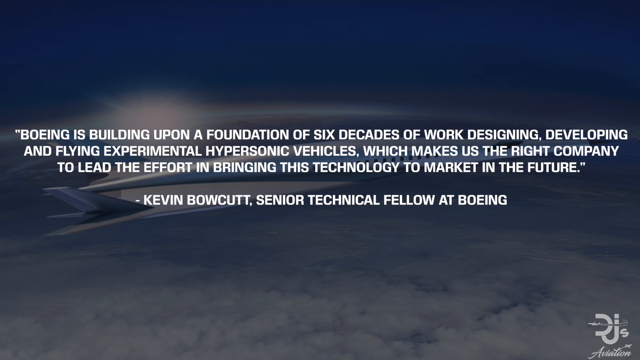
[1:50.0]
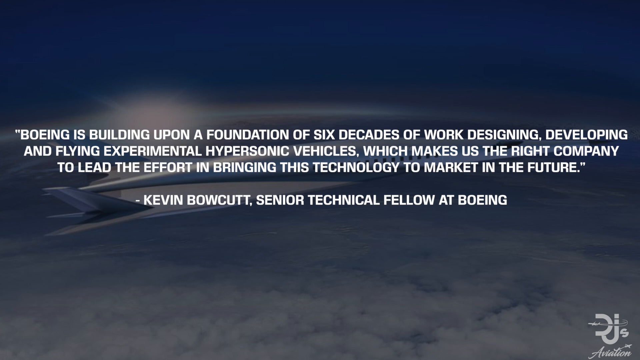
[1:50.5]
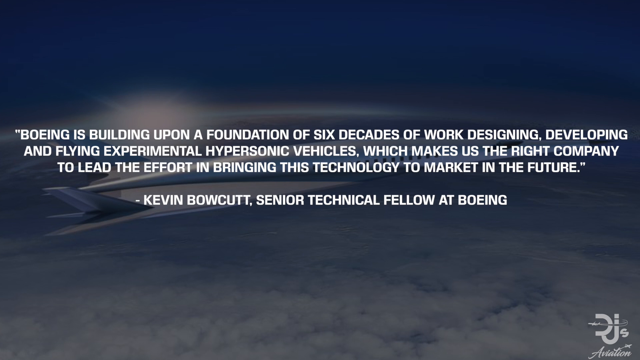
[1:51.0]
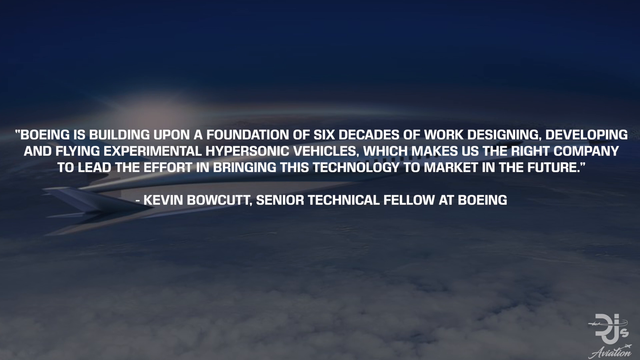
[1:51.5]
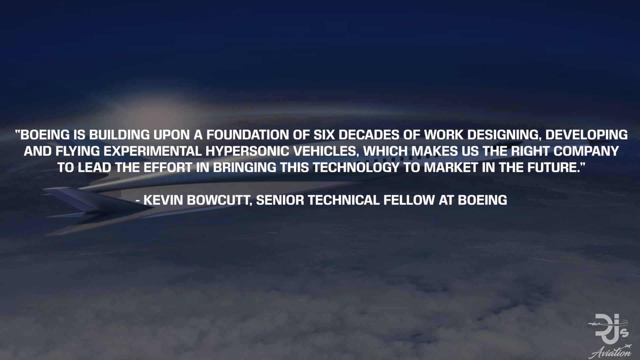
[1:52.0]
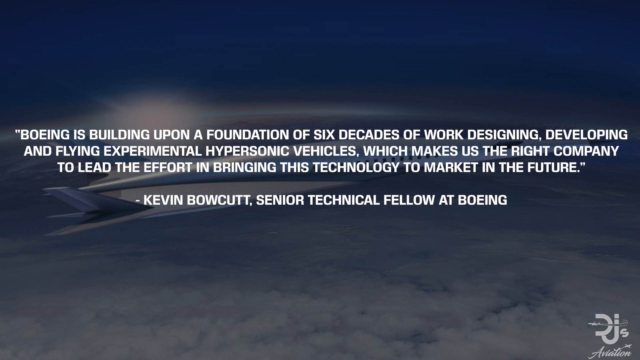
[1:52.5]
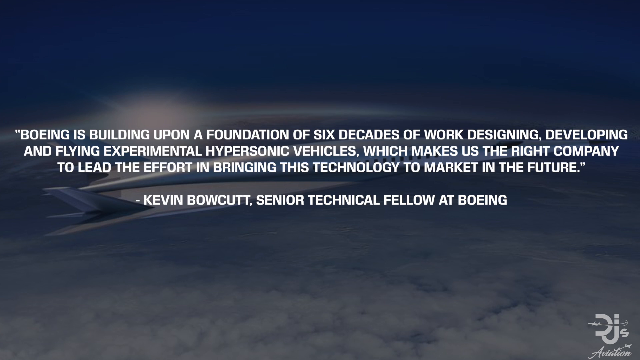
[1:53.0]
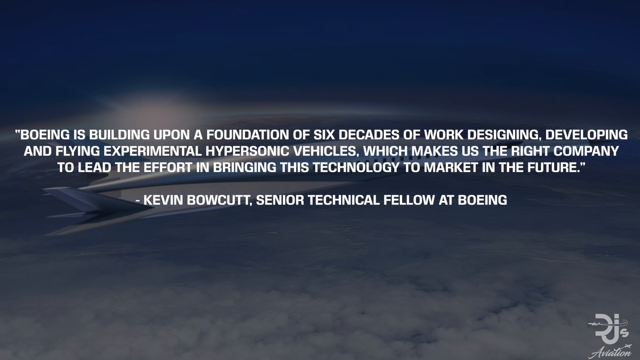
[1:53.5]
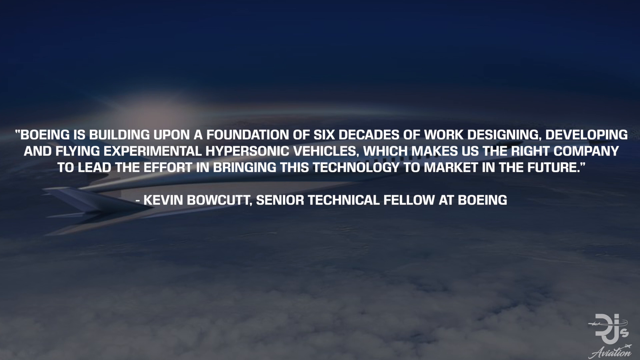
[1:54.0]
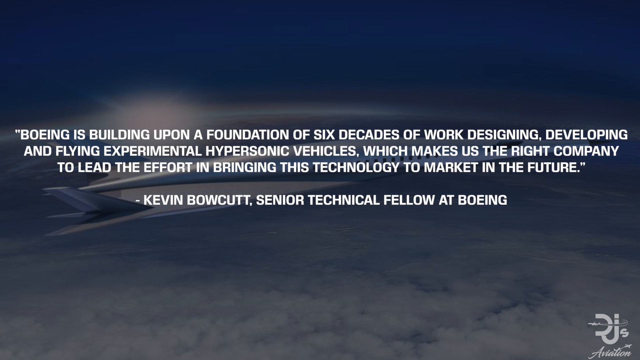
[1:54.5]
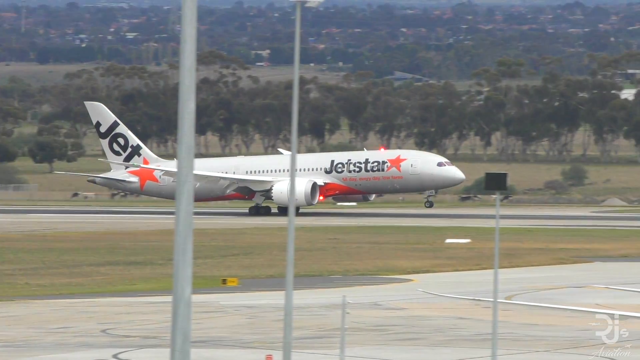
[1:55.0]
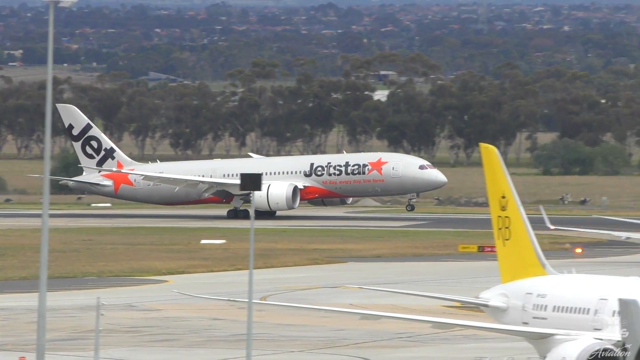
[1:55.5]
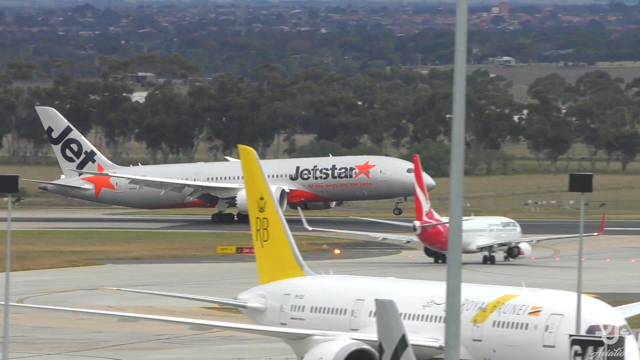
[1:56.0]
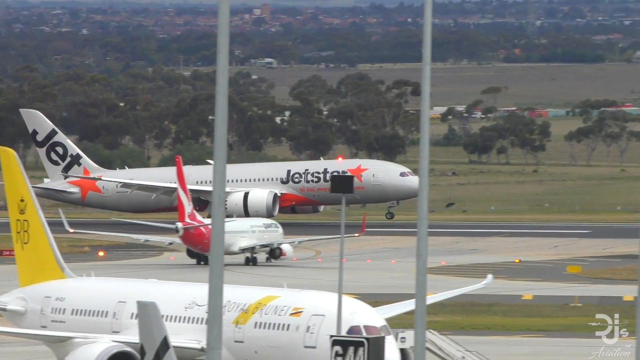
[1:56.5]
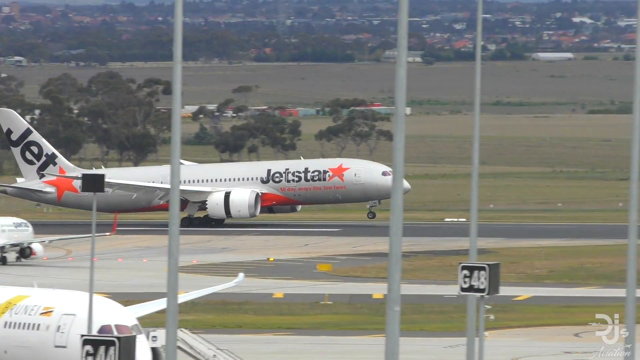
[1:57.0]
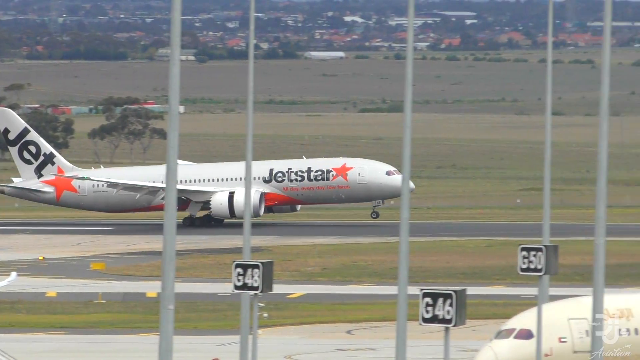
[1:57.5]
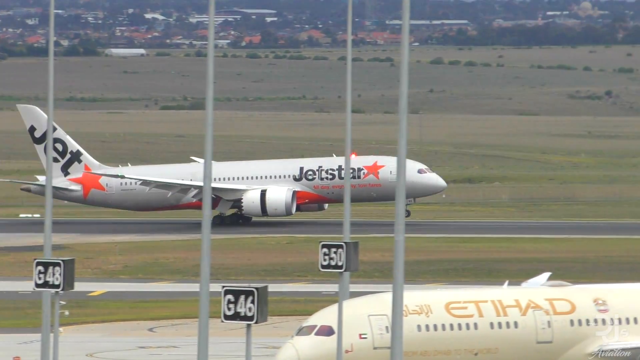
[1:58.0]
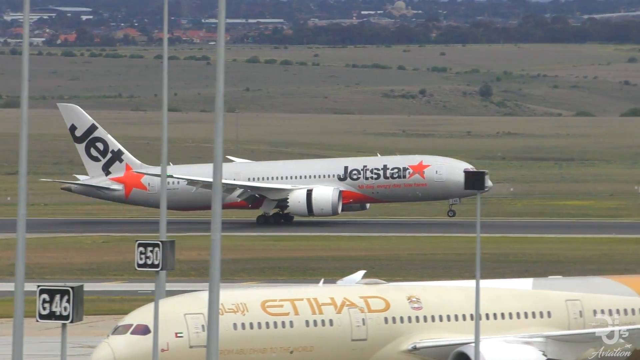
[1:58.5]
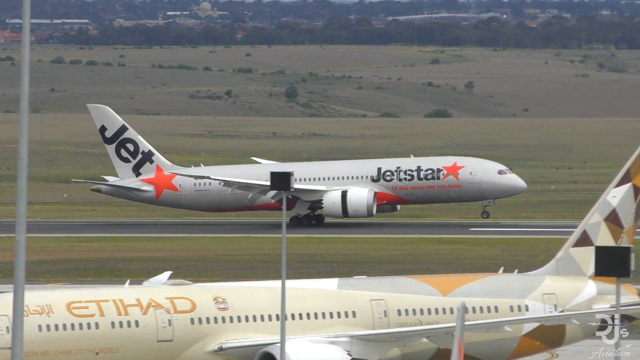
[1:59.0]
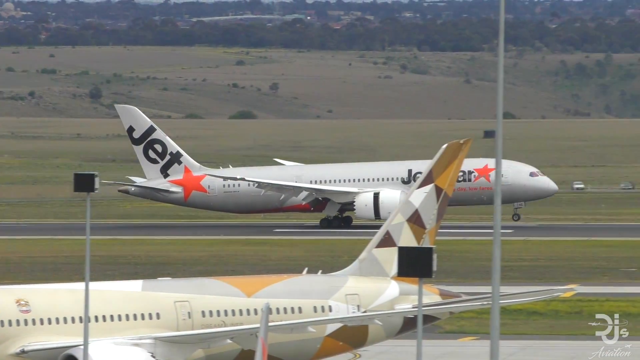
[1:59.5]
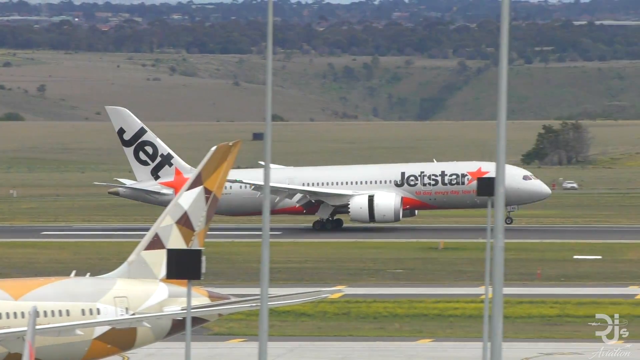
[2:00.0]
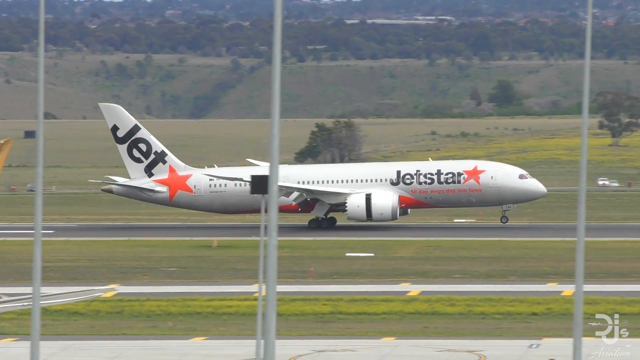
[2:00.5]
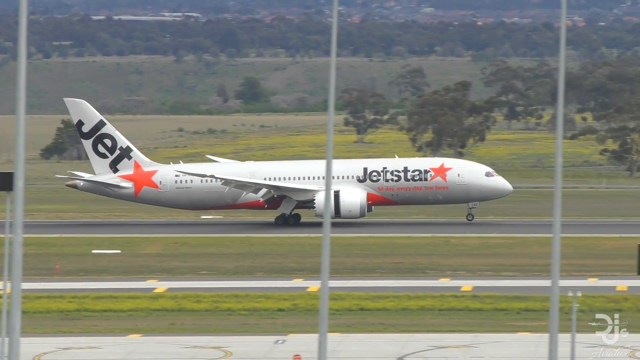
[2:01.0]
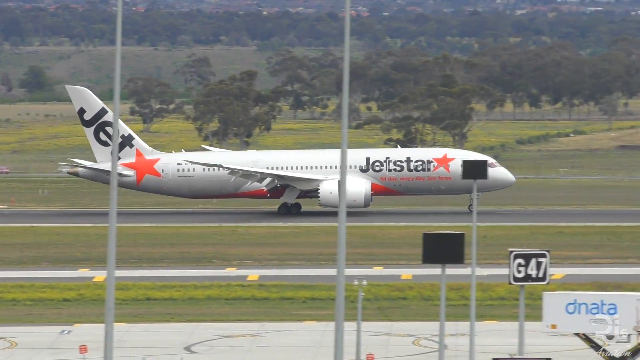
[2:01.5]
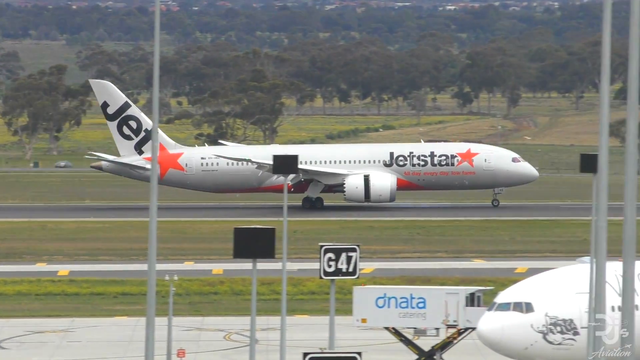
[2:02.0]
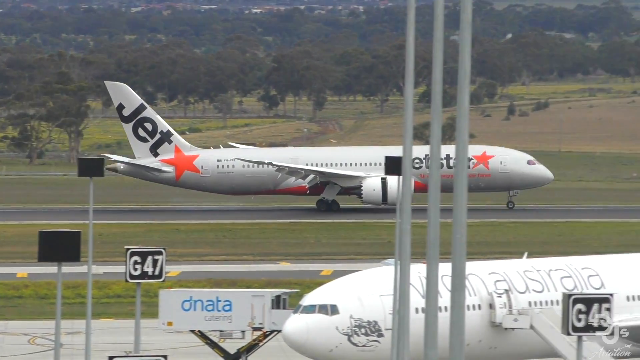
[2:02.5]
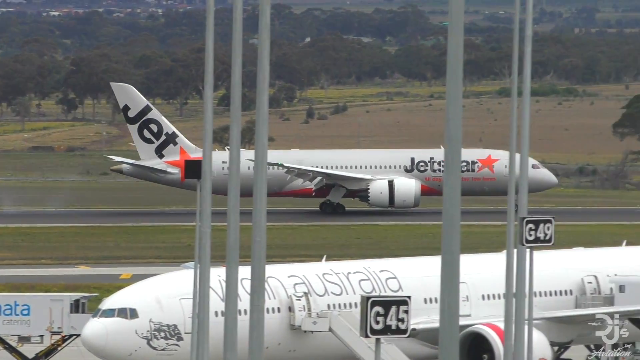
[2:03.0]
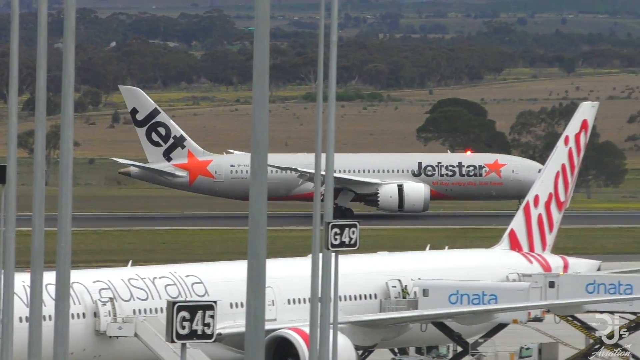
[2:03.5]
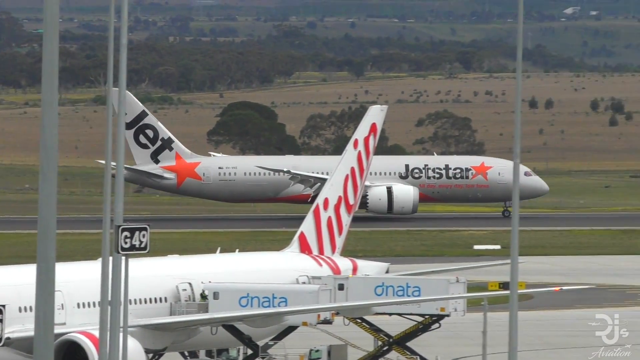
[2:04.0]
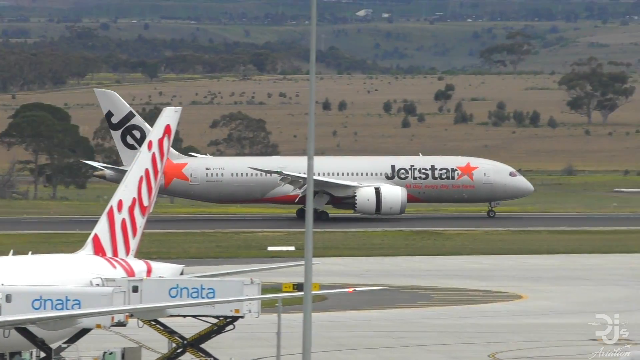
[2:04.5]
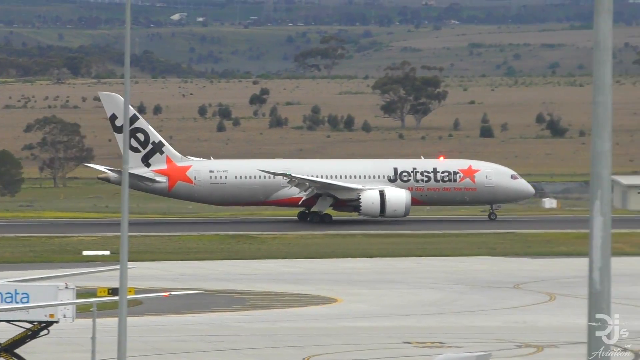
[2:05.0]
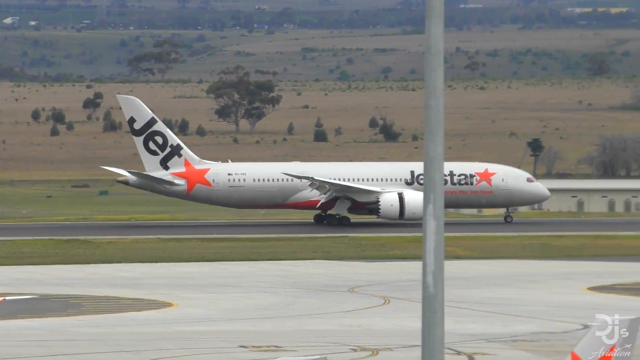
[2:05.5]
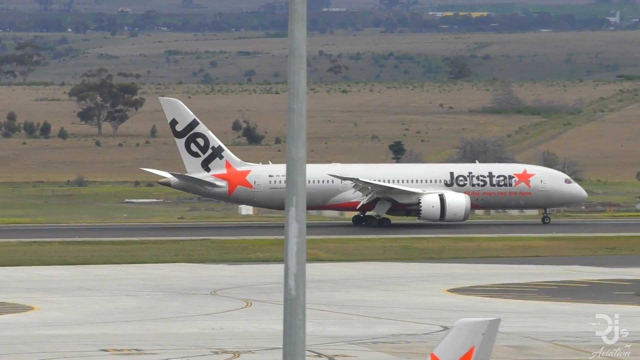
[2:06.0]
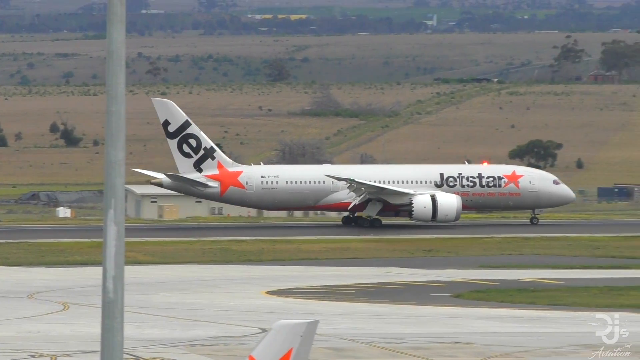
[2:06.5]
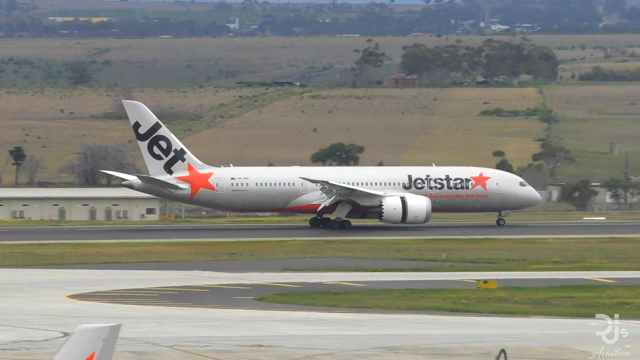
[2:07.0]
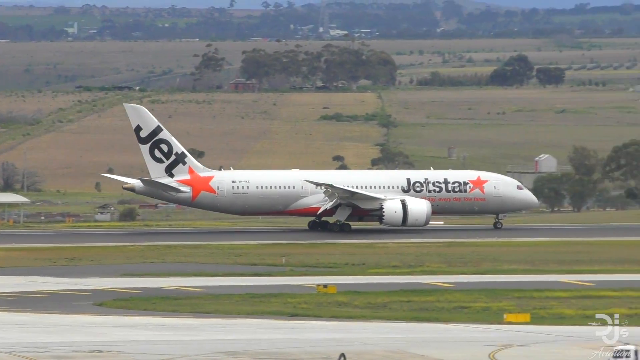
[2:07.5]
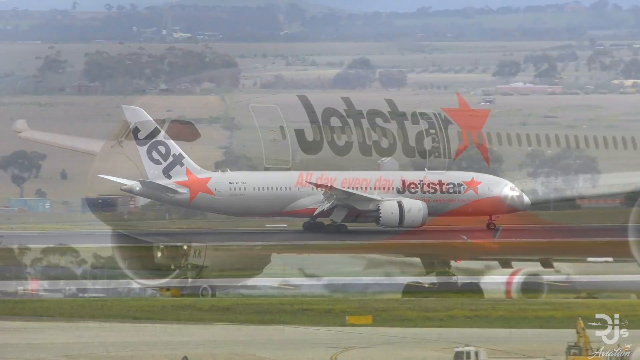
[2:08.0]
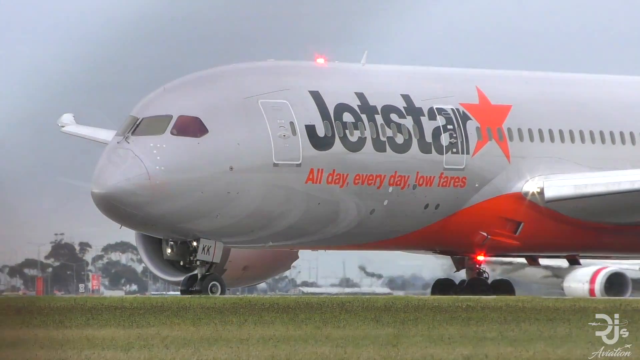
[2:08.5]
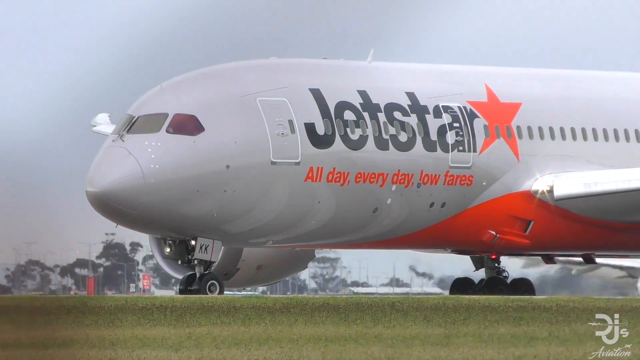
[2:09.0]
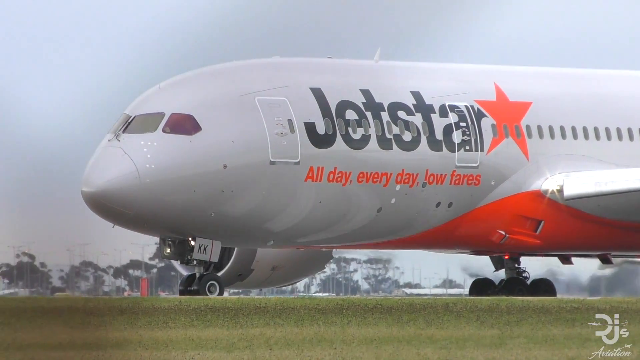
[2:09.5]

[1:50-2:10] A new quote appears: "Boeing is building upon a foundation of six decades of work designing, developing, and flying experimental hypersonic vehicles, which makes us the right company to lead the effort in bringing this technology to market in the future," again attributed to Kevin Bowcutt, senior technical fellow at Boeing. The Jetstar airplane is then shown landing on the runway, passing some other planes as it touches down, slowing and coming to a stop. From a different, closer angle, the cockpit windows, the doors on the side of the plane and the Jetstar logo are visible, with the slogan "all day, every day, low fares" underneath the logo.